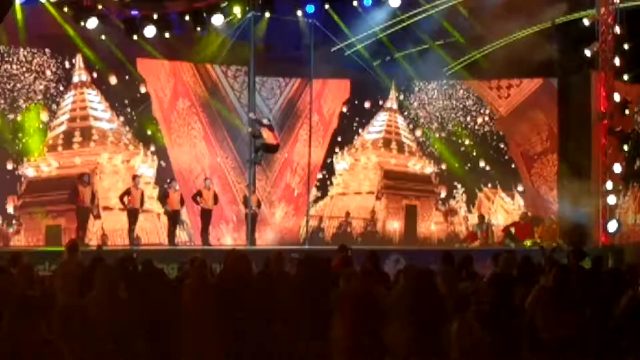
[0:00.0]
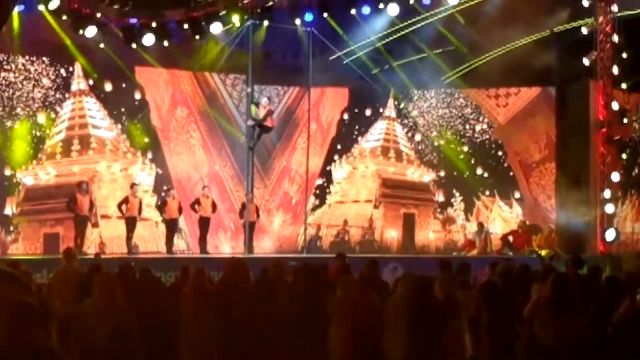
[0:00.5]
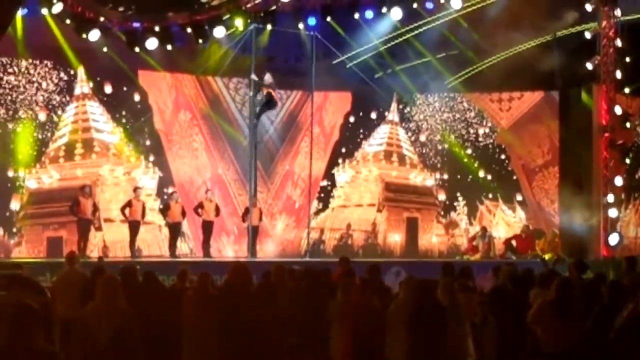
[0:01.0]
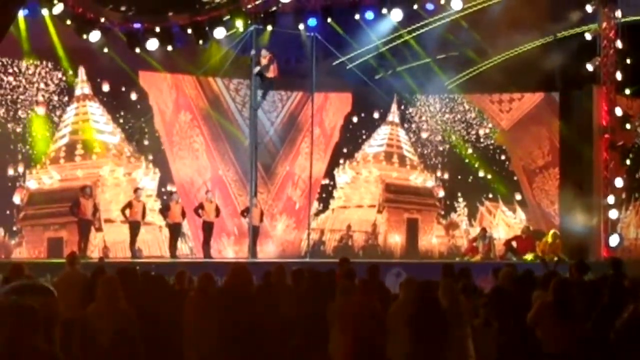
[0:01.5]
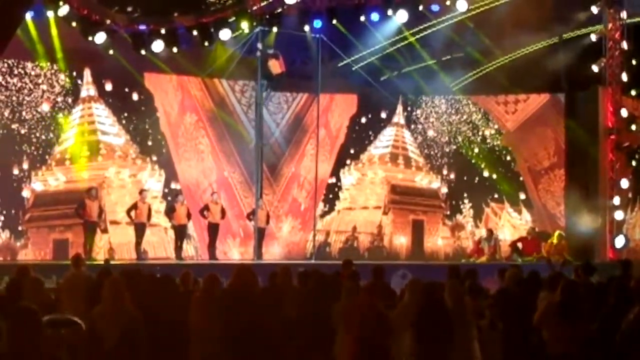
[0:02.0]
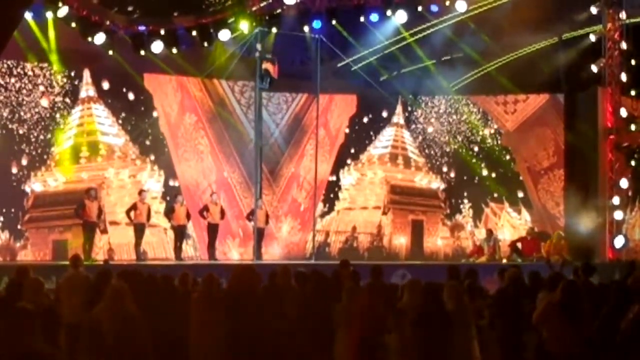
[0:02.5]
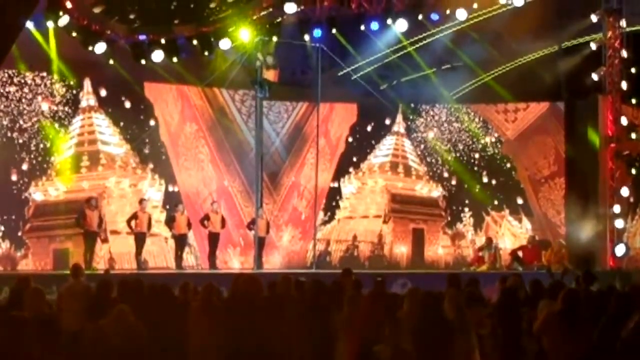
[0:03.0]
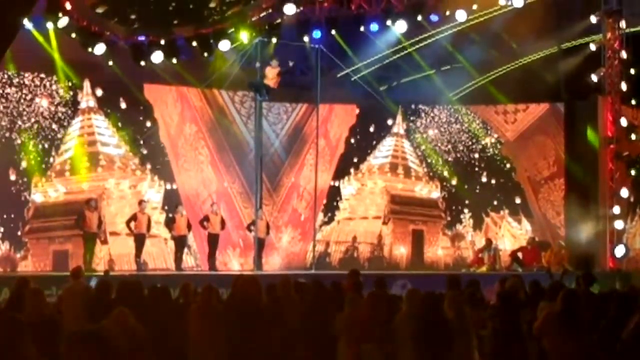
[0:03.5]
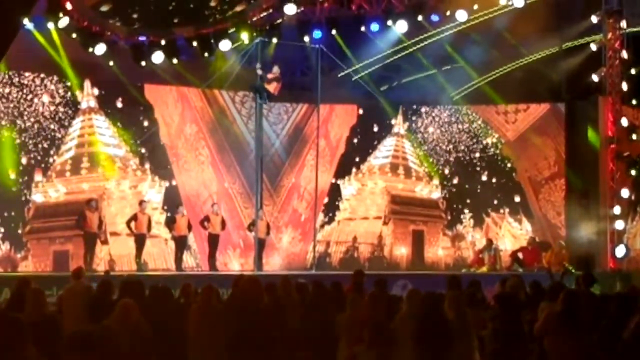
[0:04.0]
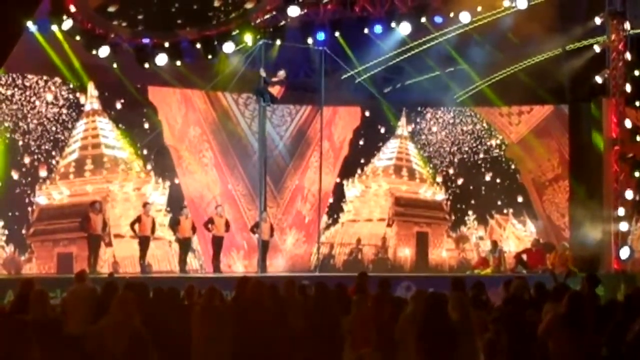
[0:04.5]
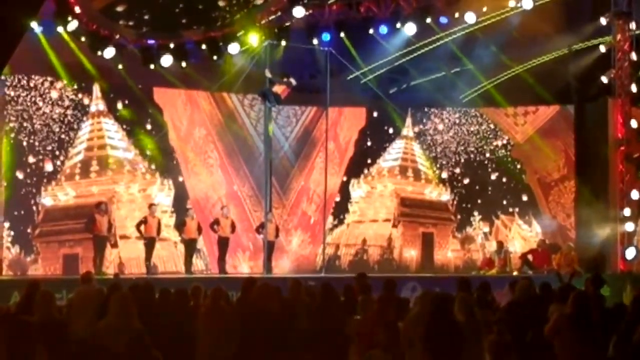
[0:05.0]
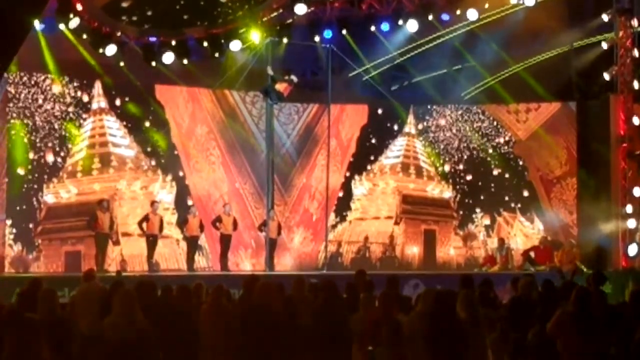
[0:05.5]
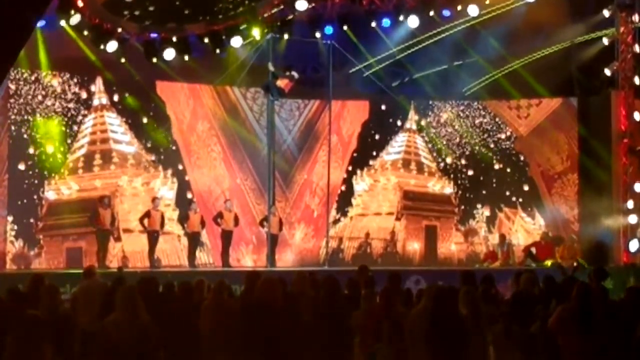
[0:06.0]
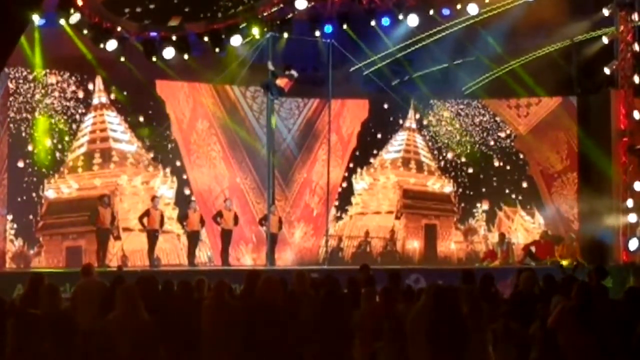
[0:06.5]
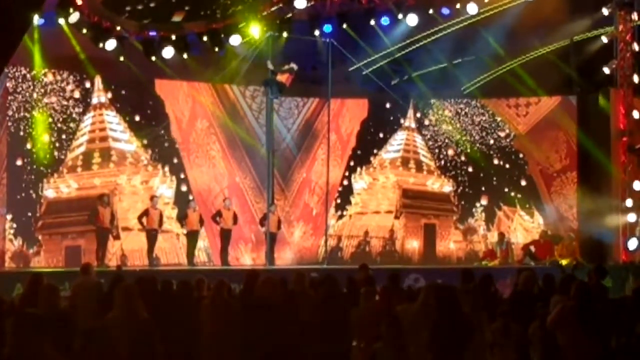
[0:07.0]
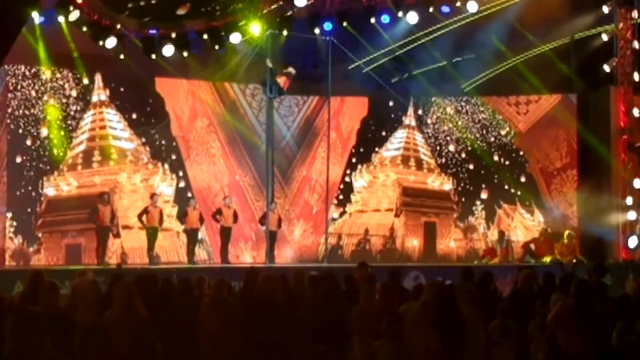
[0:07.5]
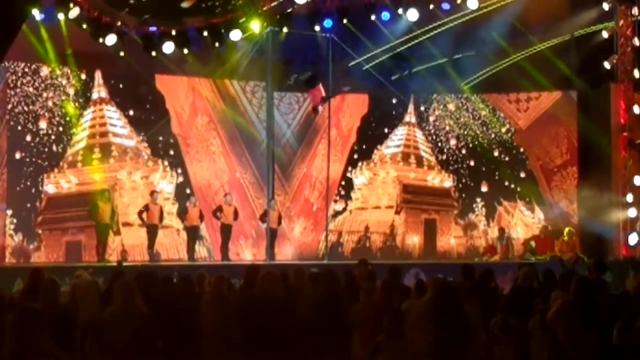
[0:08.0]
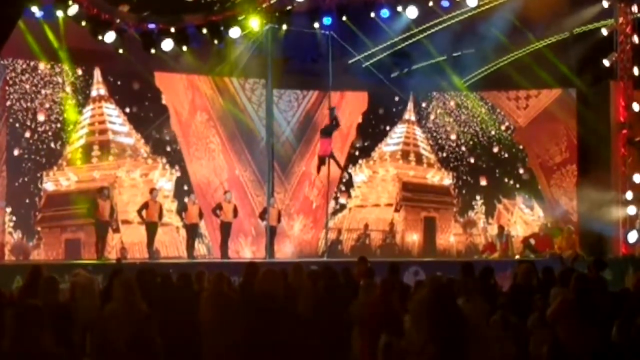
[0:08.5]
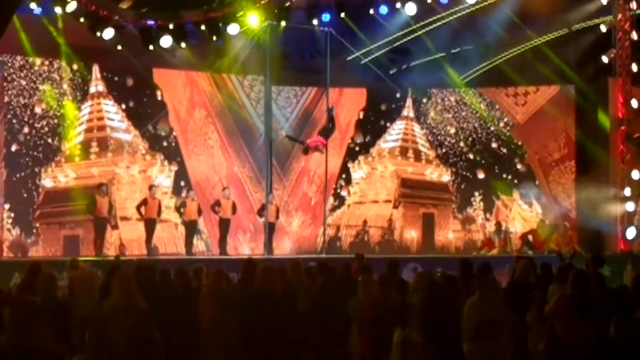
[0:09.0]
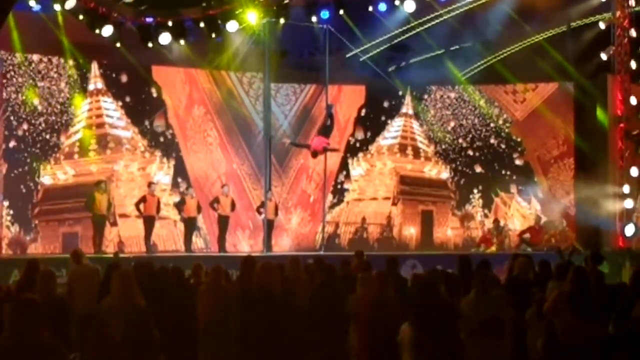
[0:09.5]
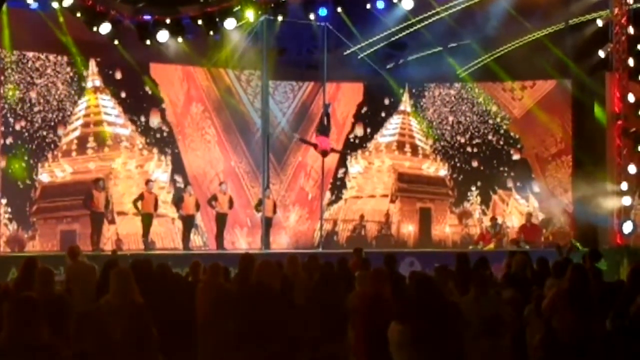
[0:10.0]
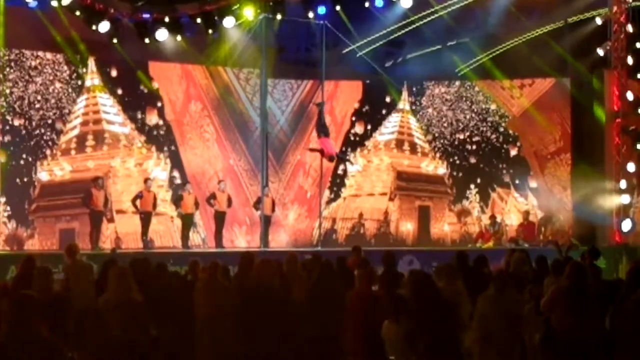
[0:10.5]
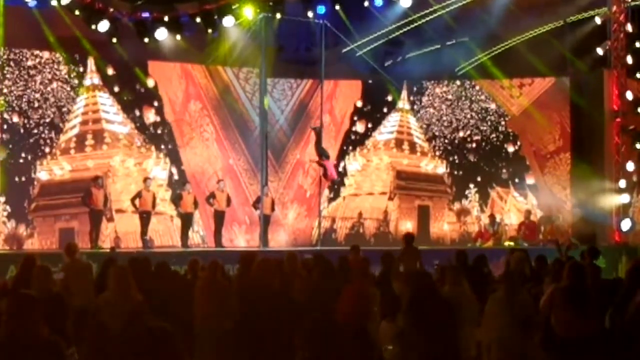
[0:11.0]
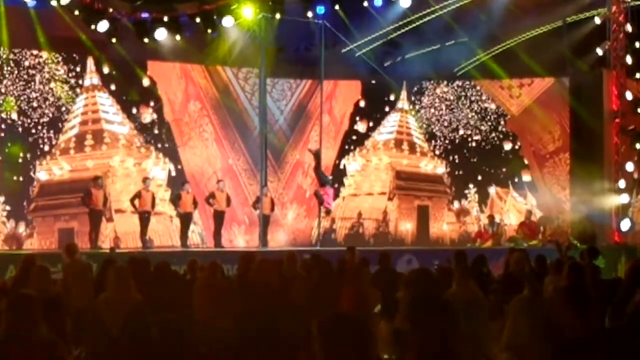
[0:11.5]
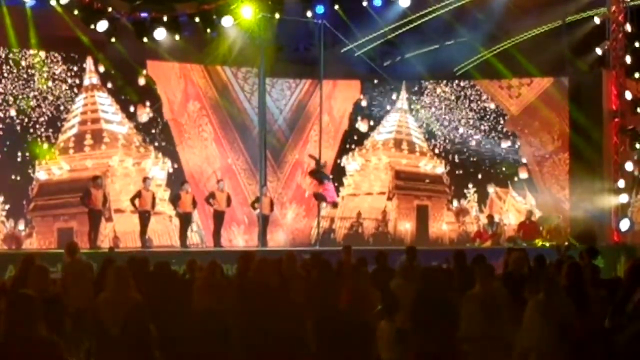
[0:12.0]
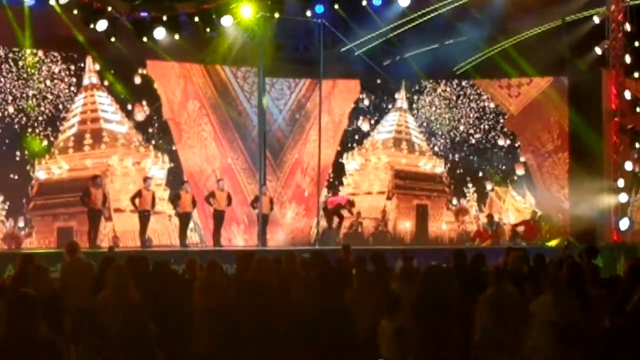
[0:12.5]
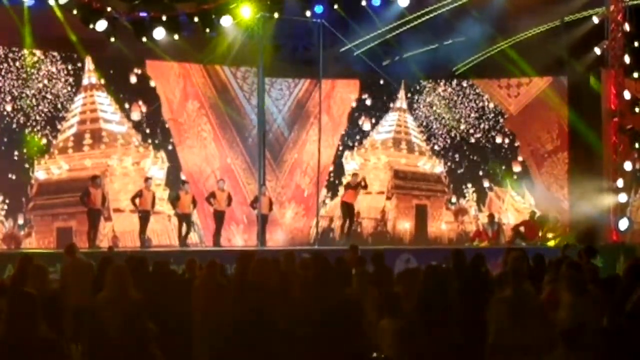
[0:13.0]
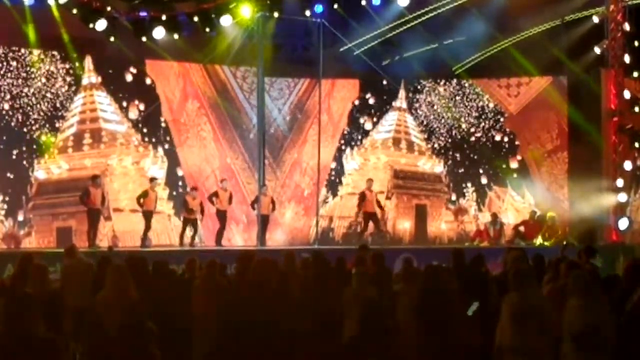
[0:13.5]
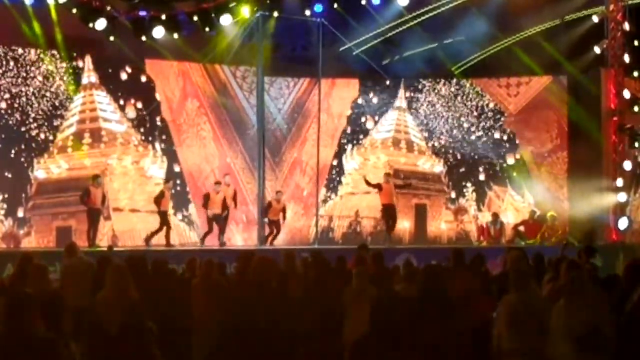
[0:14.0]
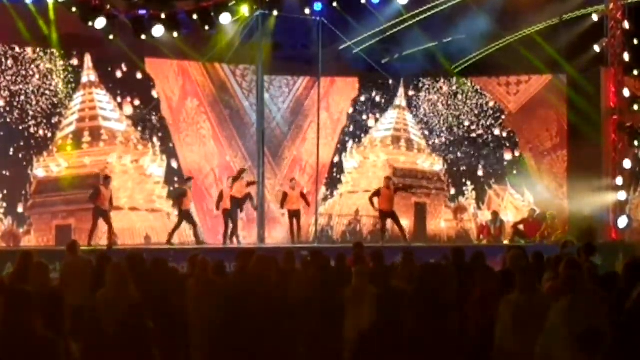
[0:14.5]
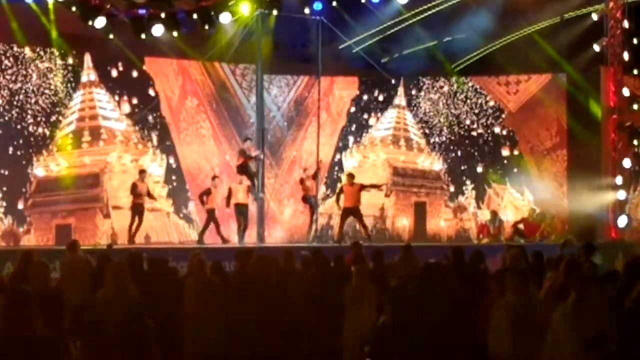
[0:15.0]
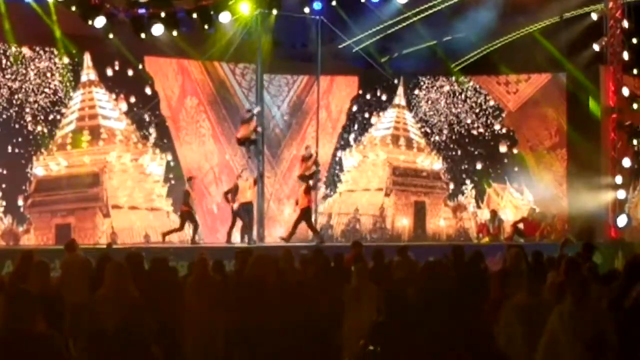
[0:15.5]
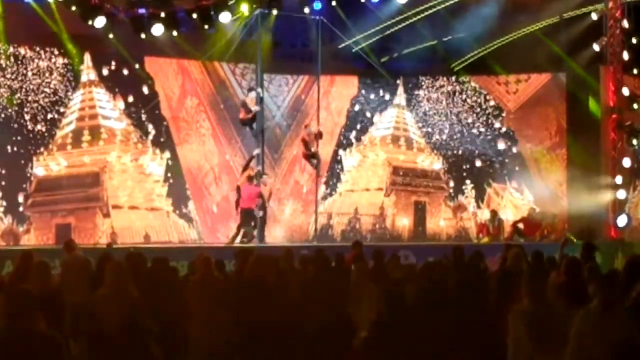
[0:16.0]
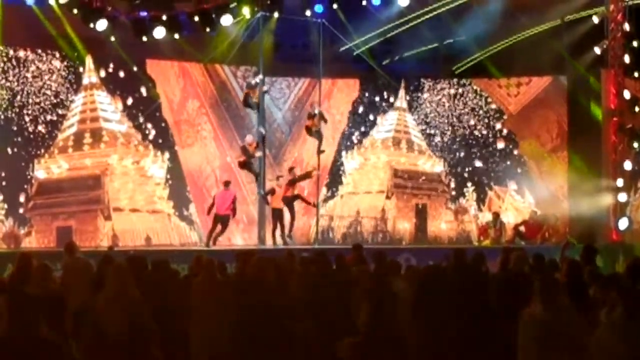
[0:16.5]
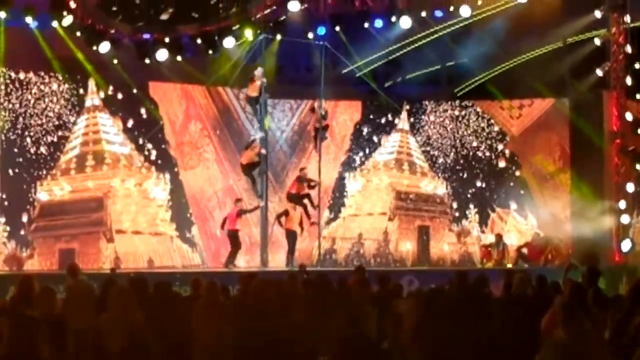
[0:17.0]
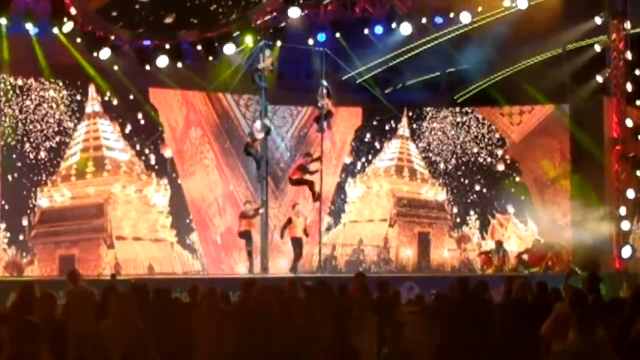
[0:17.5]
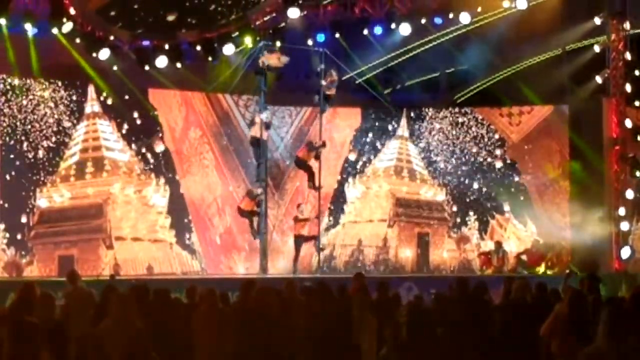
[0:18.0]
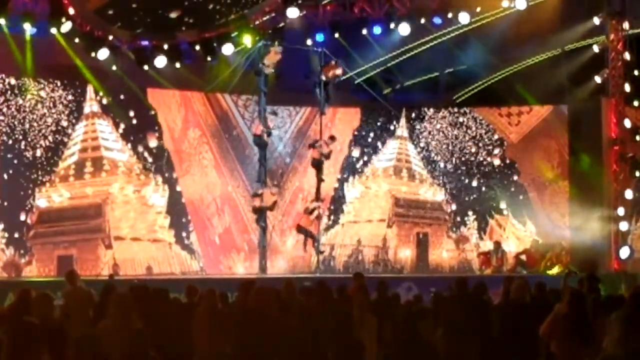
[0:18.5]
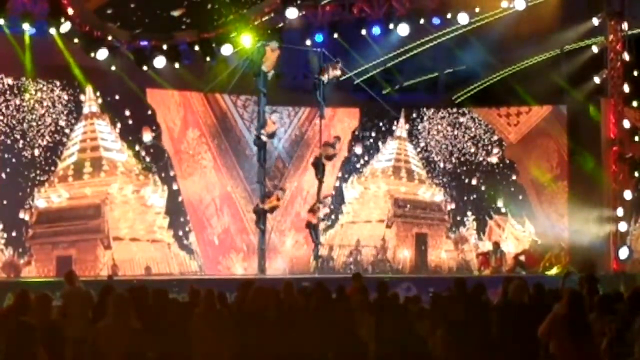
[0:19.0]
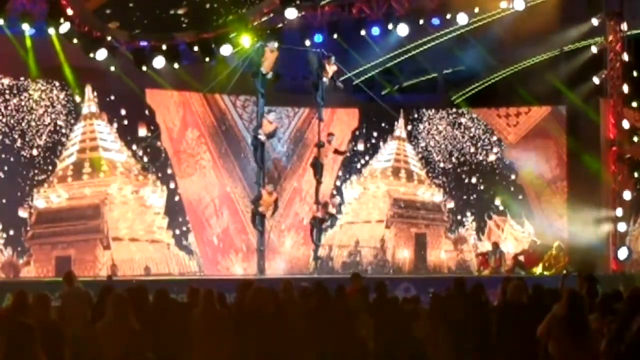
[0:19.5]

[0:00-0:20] A group of people, apparently performing magic or something similar, climb what looks like a tree or something like it, then fall from it while people watch and enjoy it. They climb along a long place, showing their skills. All of them wear the same colour and pattern of clothing: black pants, a black shirt and what seems to be an orange T-shirt. Behind them is a big screen showing pictures of what appears to be a very ancient building.